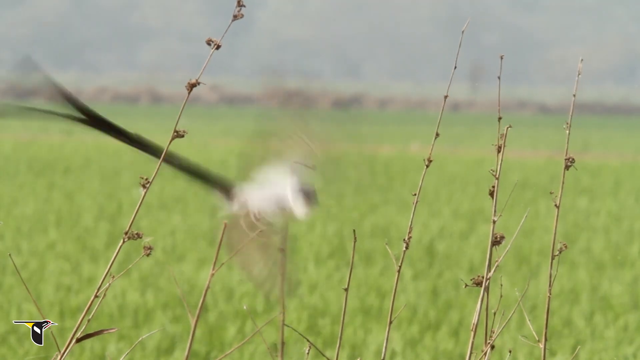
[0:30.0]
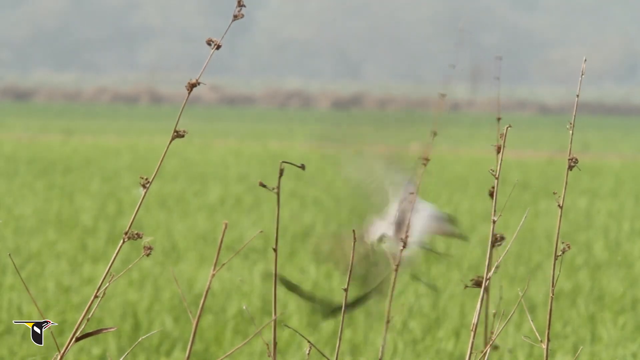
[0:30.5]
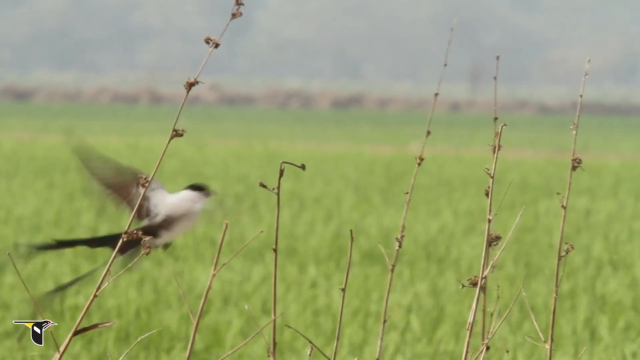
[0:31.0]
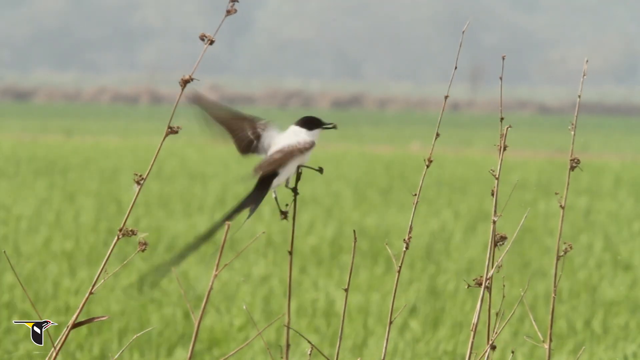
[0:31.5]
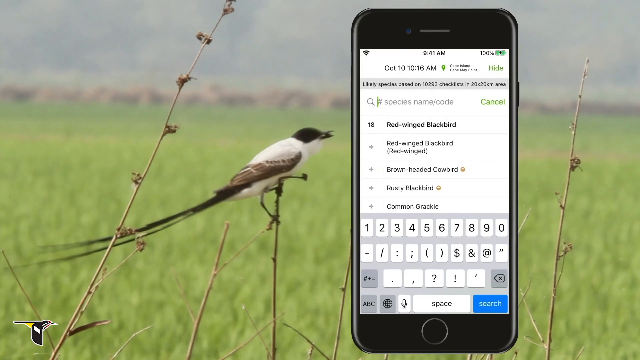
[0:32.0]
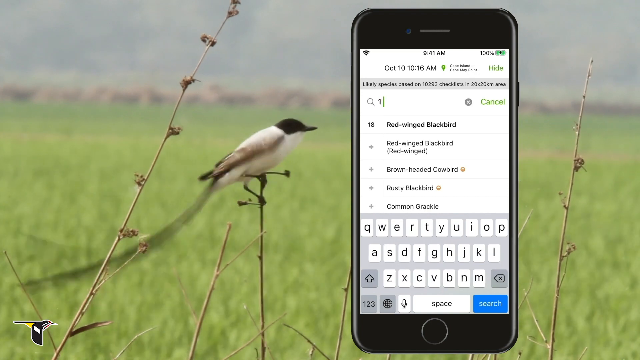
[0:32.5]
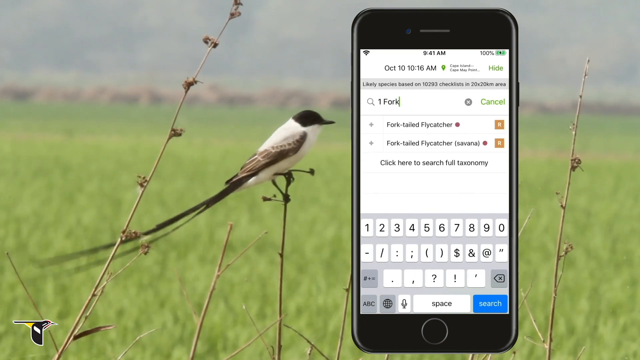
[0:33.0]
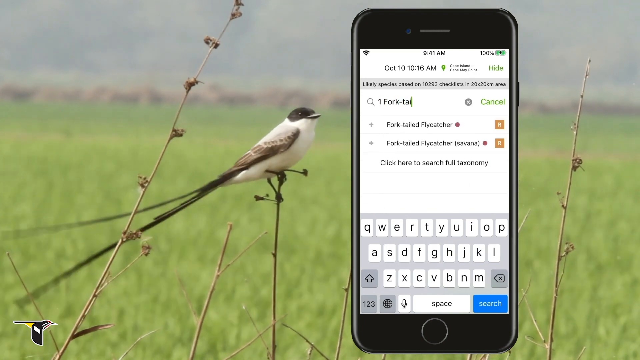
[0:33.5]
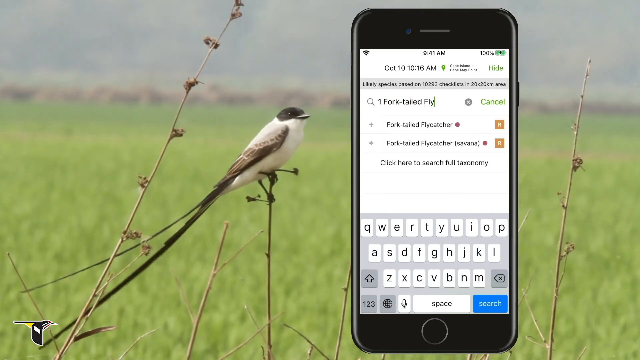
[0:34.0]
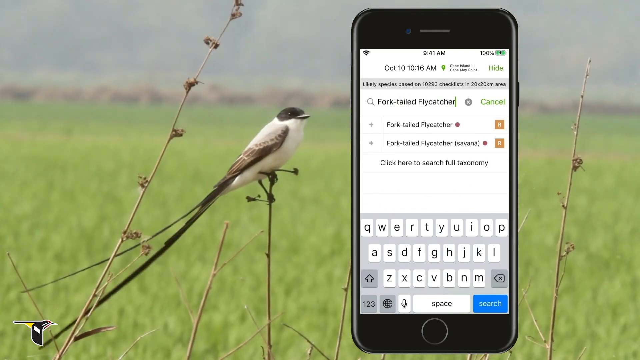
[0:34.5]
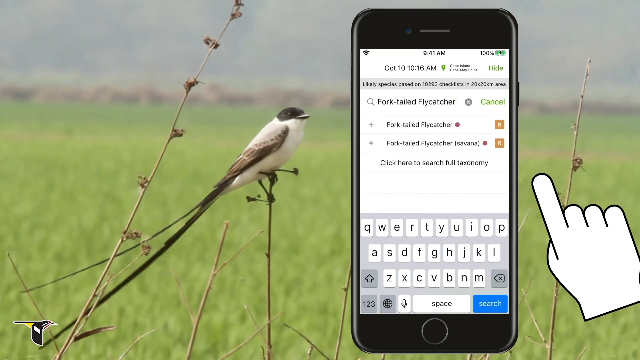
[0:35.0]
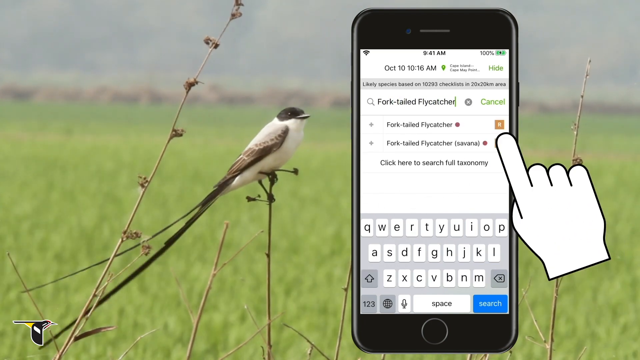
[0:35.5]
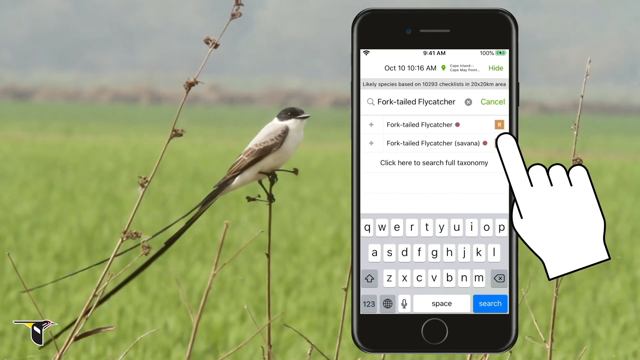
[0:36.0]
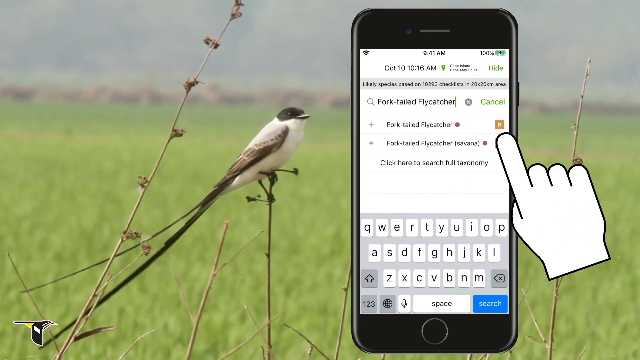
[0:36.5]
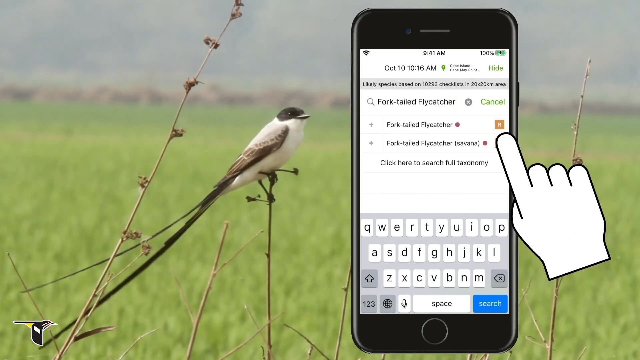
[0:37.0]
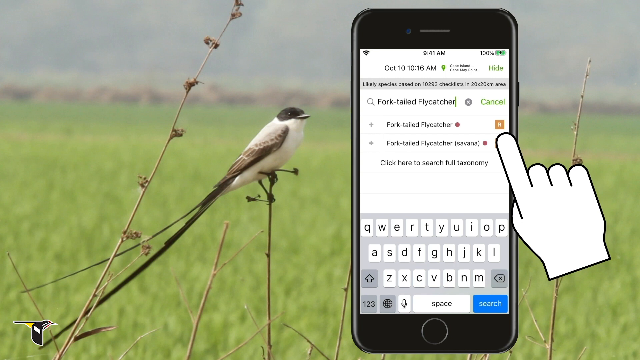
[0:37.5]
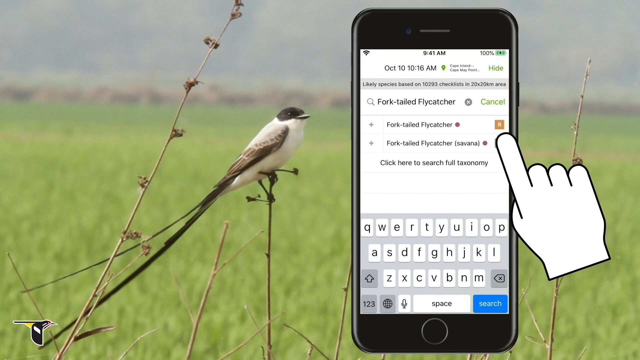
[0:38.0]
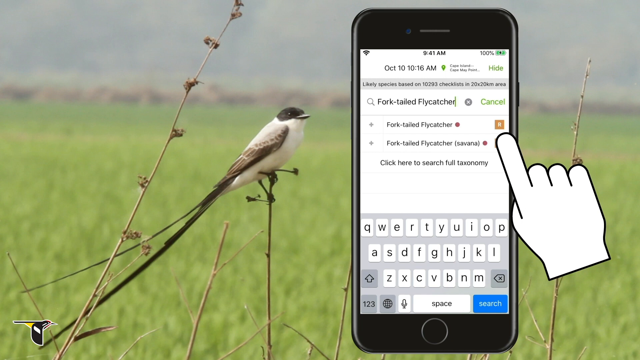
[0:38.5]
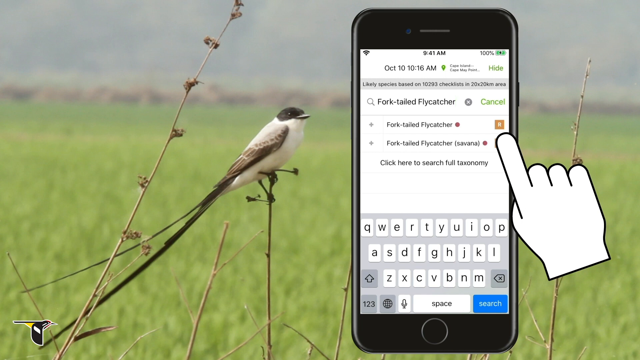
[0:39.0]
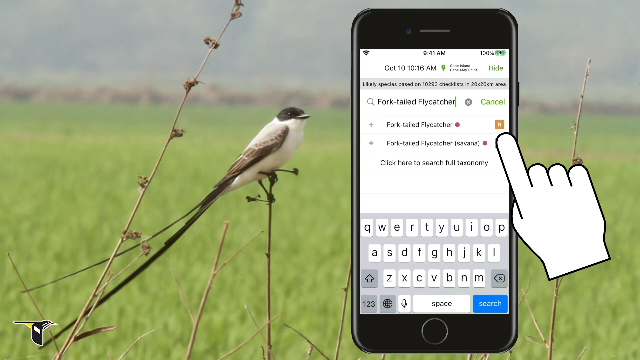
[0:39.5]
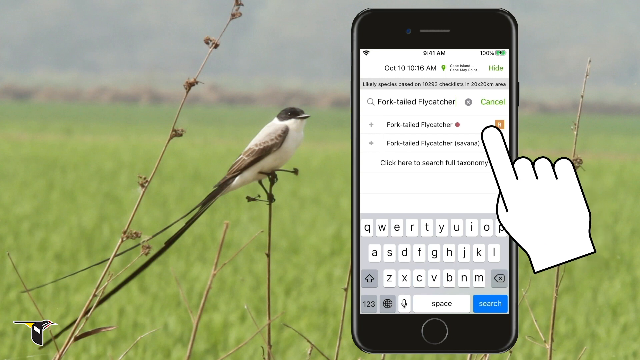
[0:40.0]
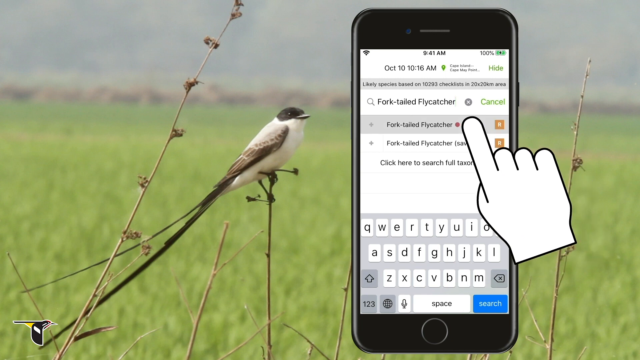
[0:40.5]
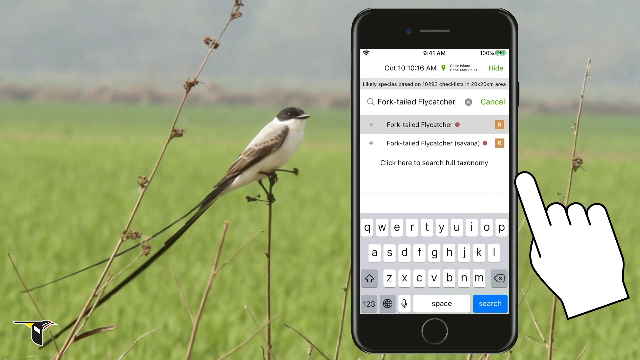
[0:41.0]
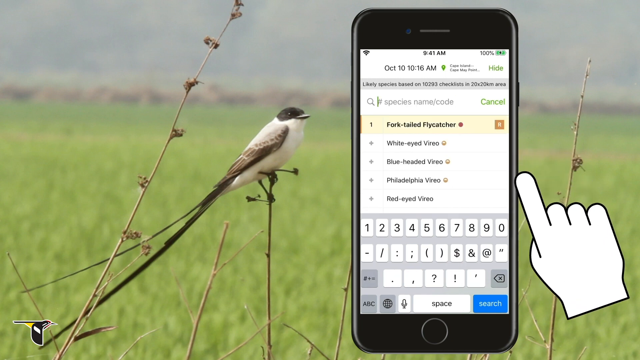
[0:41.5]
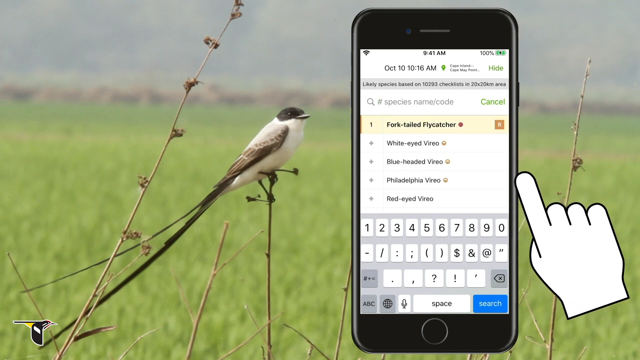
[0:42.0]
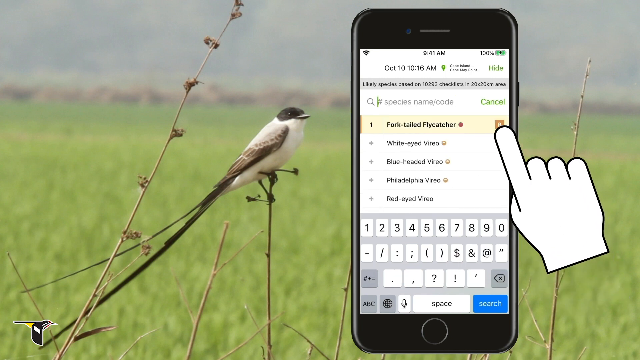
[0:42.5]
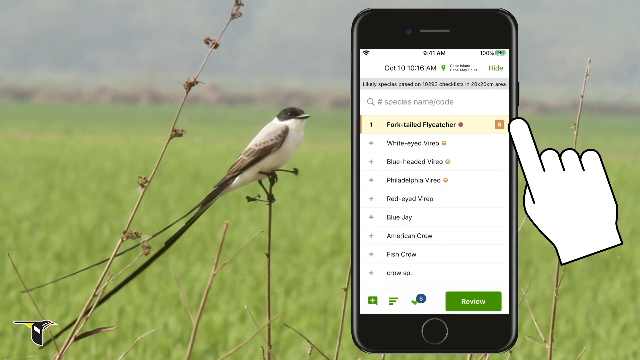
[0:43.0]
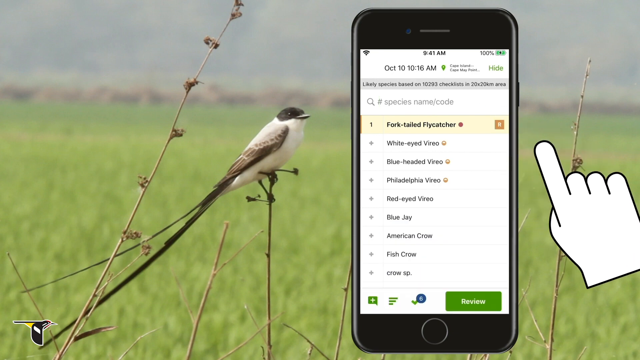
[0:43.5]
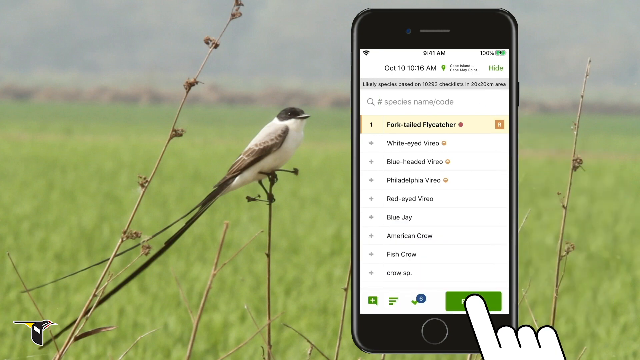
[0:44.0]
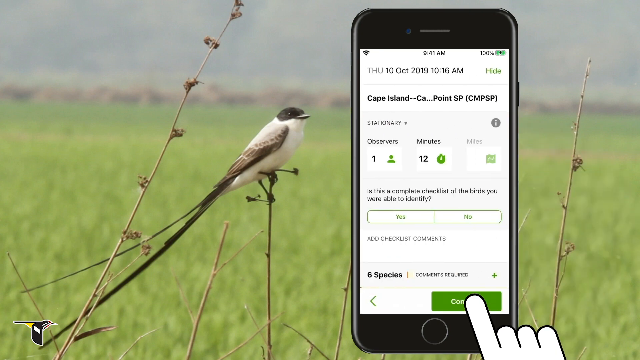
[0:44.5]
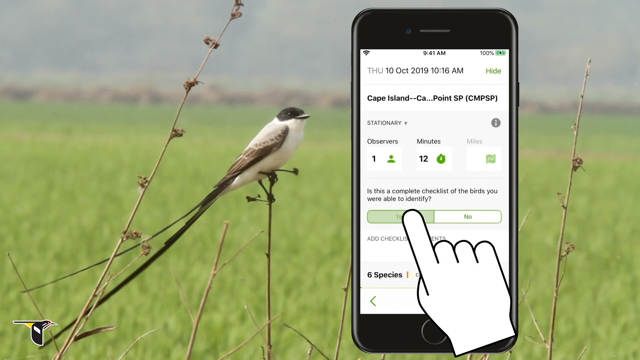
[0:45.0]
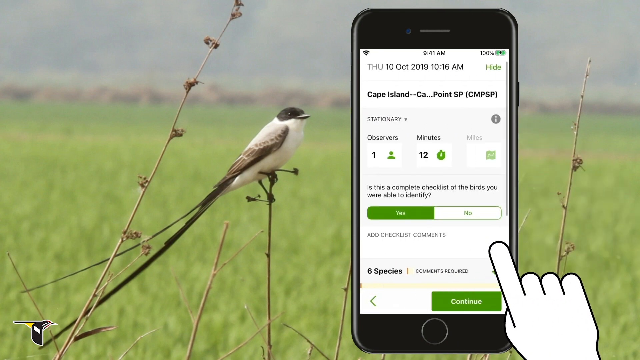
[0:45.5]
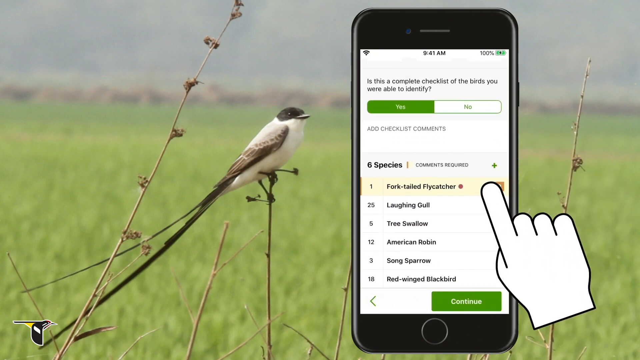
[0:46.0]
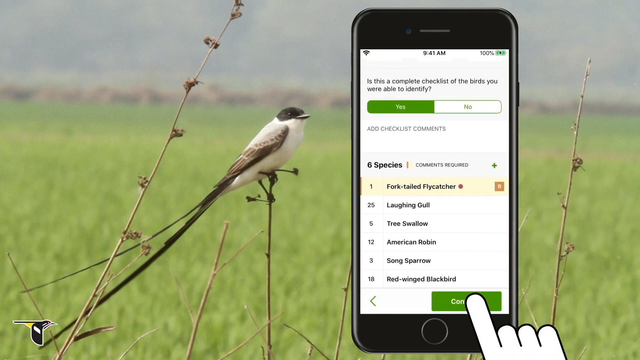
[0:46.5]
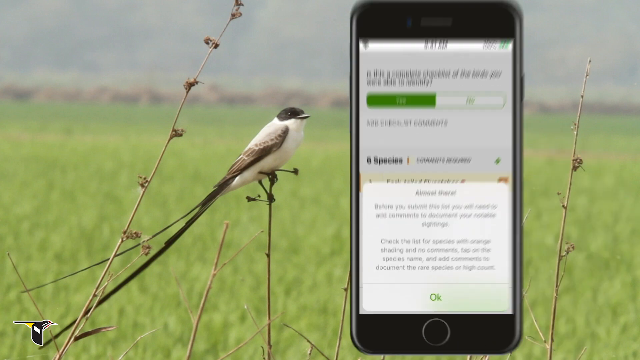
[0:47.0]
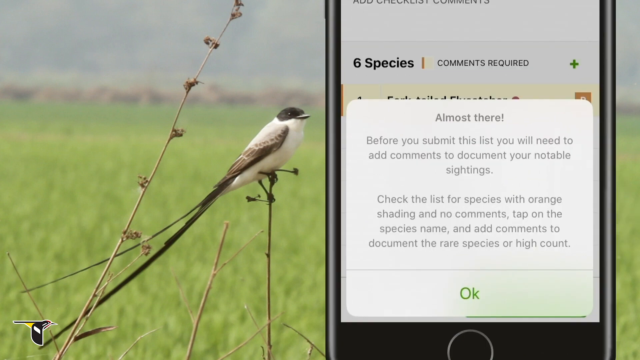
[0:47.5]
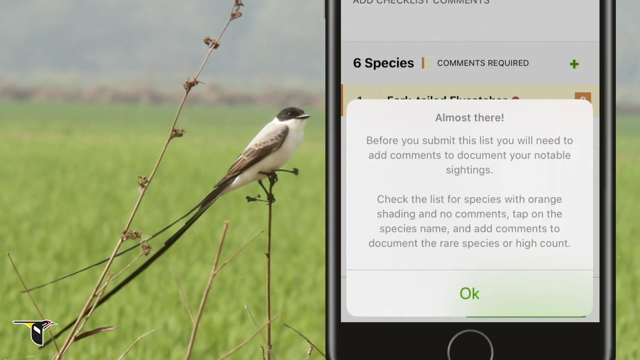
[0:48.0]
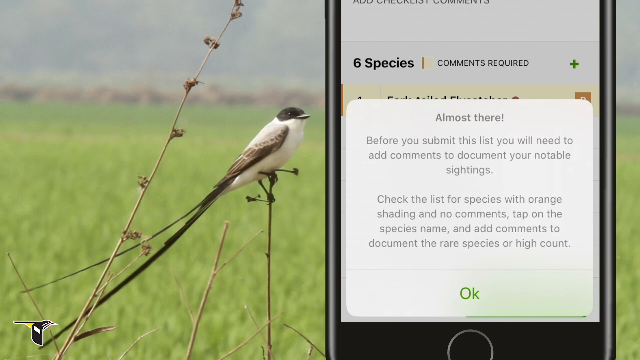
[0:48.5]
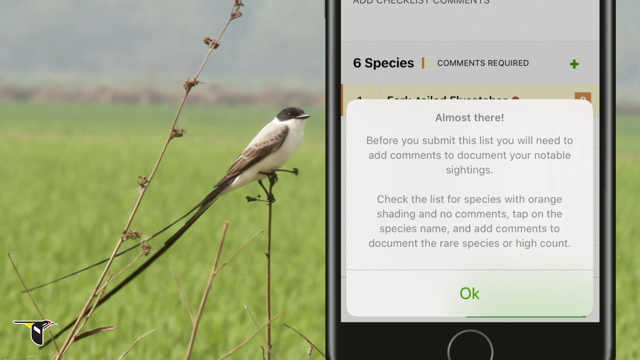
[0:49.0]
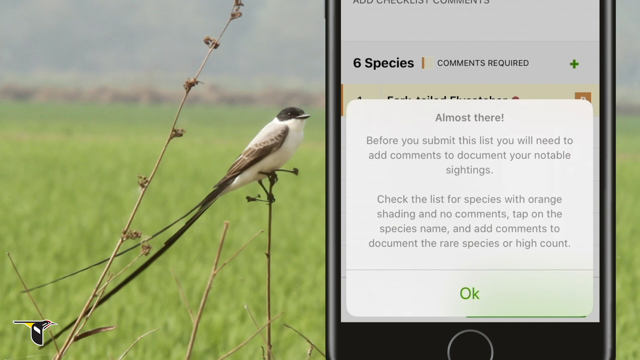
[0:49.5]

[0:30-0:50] The bird with a white body, brown wings, a black head and a long black tail is across a grassy field, landed on a twig or some sort of weed. The phone app is then shown: the user types into a field to enter the type of bird, a fork-tailed flycatcher, and runs a search and ID of the bird. The app's operation continues as the bird is searched and checked off, and then a confirmation screen appears where the person can confirm having seen the bird and provide supporting documentation, as the screen indicates.